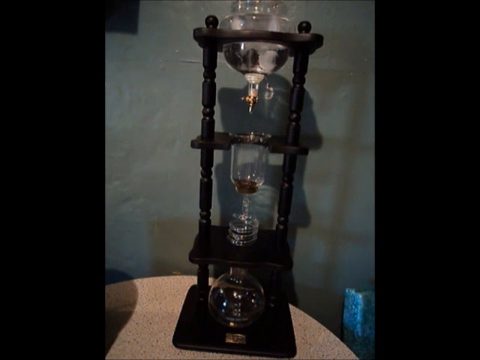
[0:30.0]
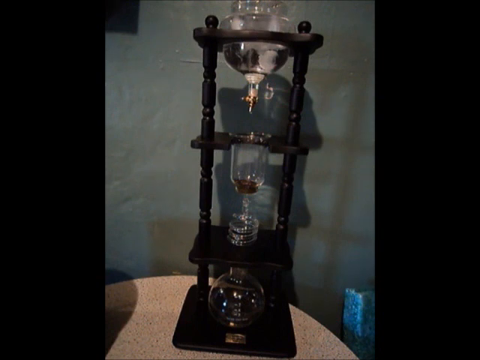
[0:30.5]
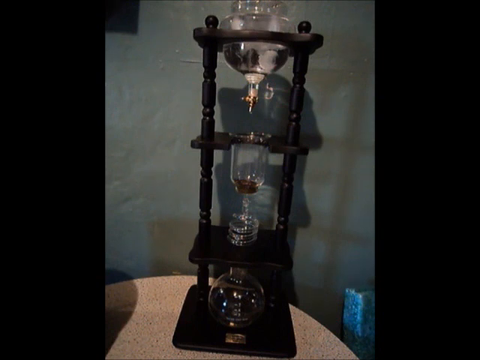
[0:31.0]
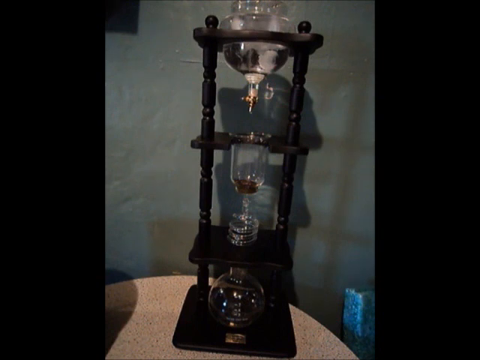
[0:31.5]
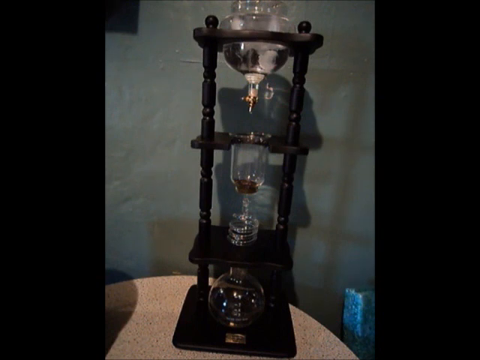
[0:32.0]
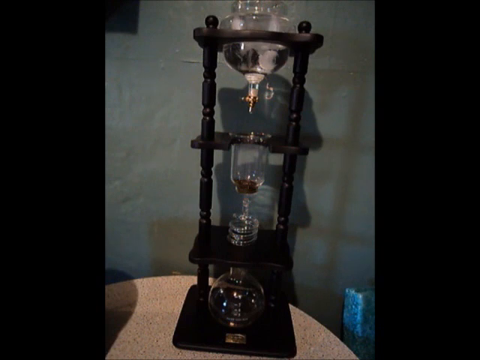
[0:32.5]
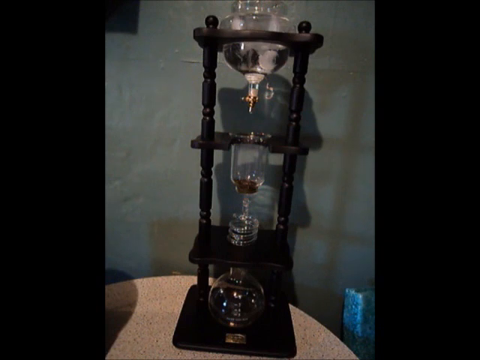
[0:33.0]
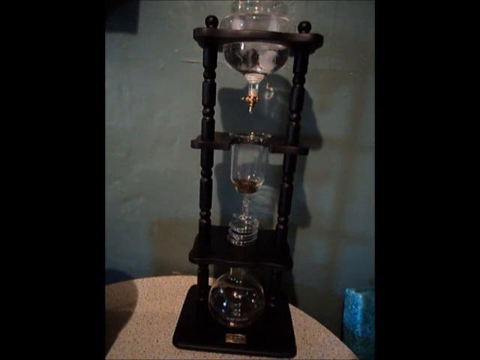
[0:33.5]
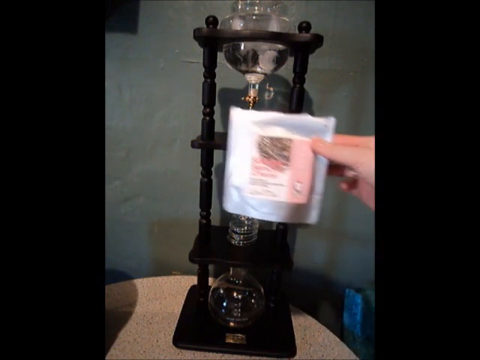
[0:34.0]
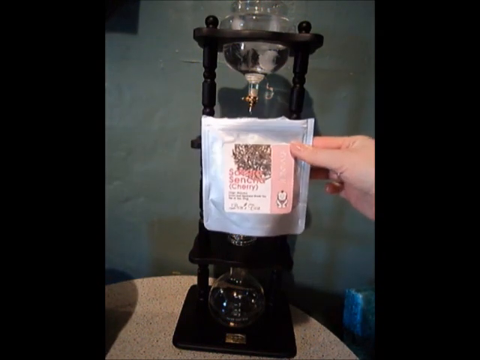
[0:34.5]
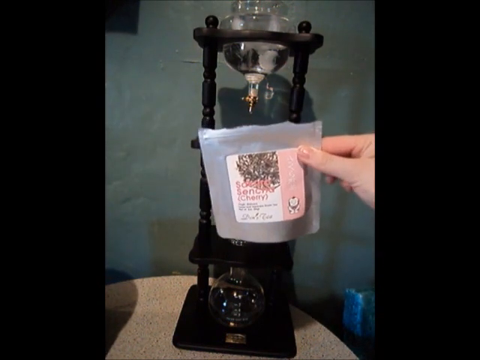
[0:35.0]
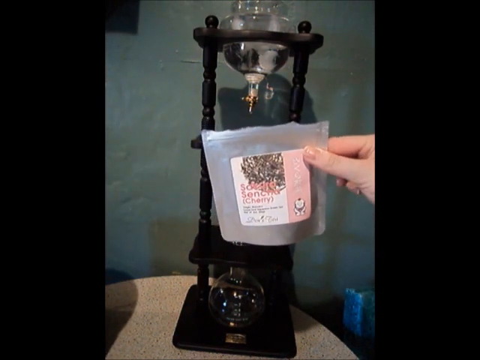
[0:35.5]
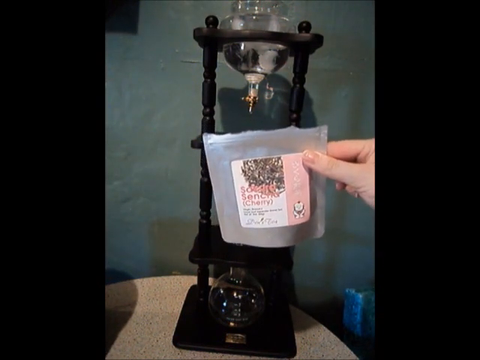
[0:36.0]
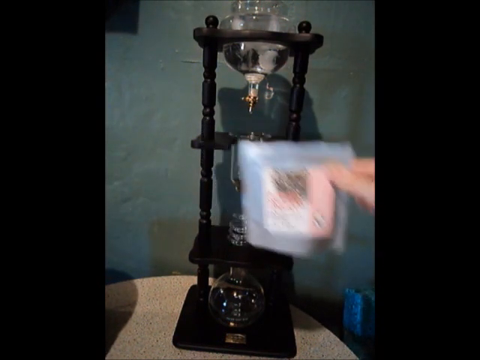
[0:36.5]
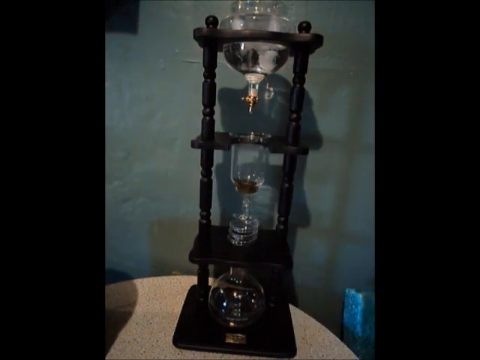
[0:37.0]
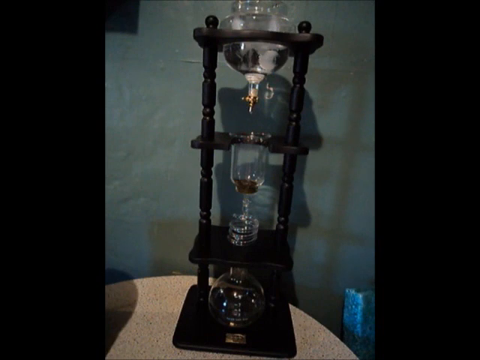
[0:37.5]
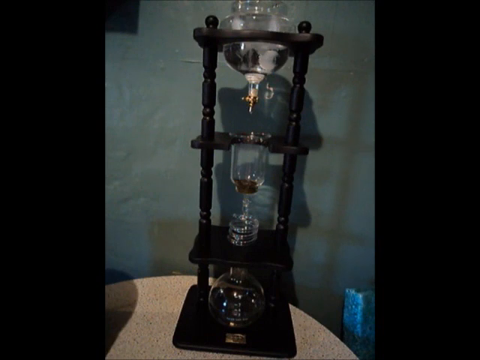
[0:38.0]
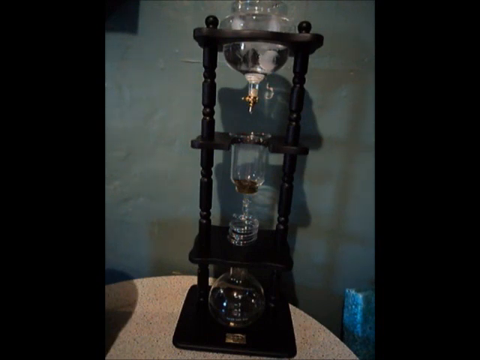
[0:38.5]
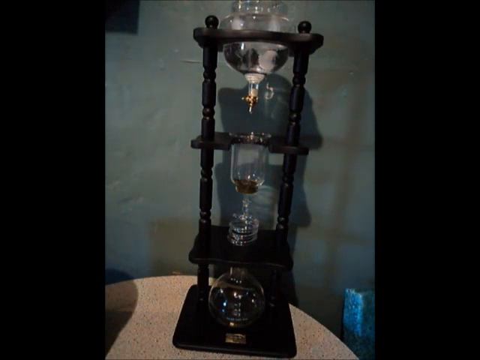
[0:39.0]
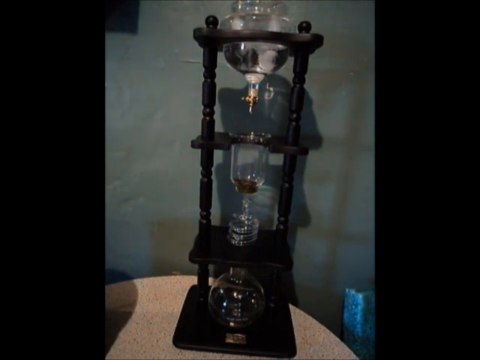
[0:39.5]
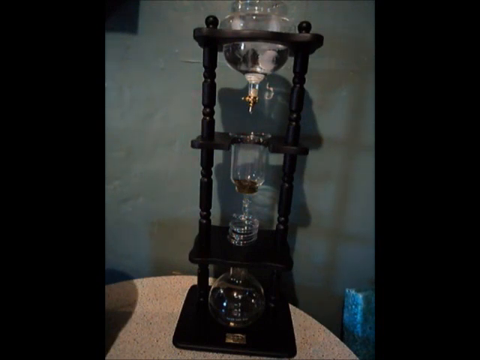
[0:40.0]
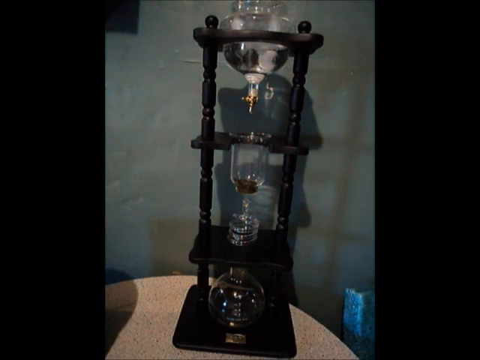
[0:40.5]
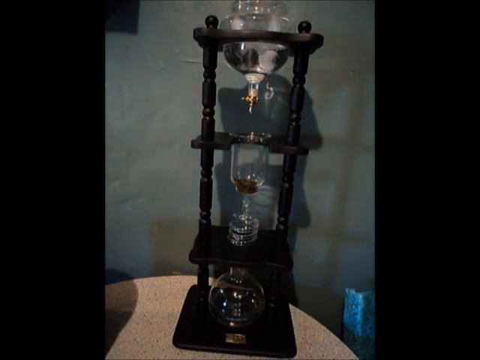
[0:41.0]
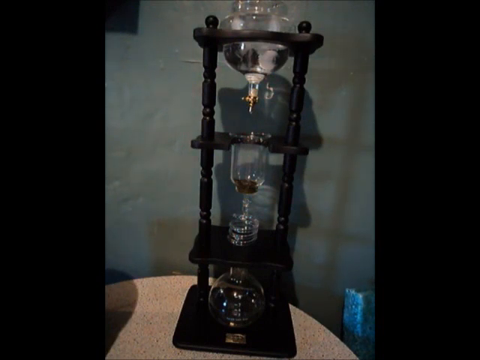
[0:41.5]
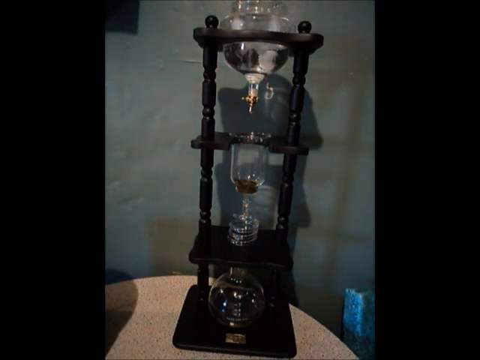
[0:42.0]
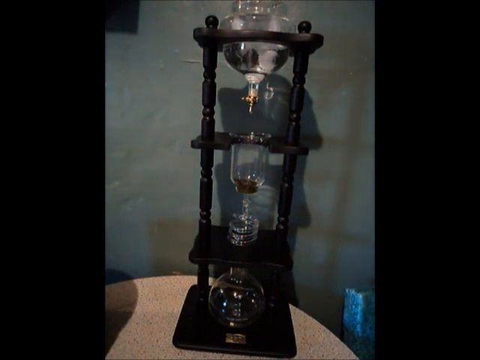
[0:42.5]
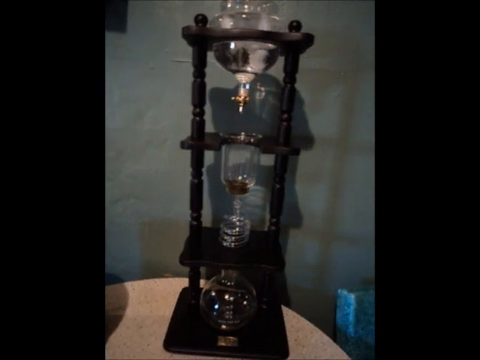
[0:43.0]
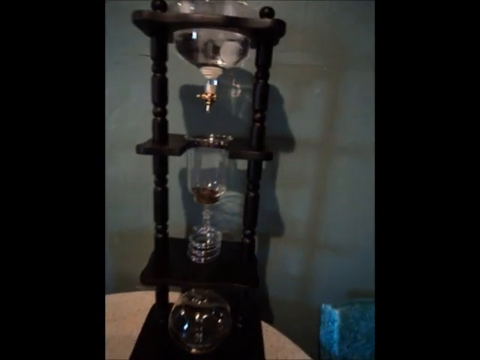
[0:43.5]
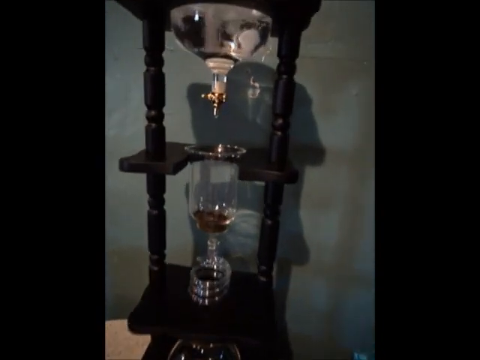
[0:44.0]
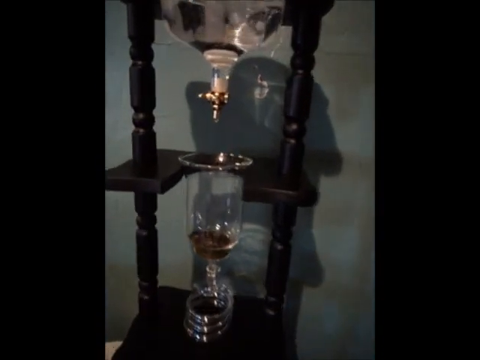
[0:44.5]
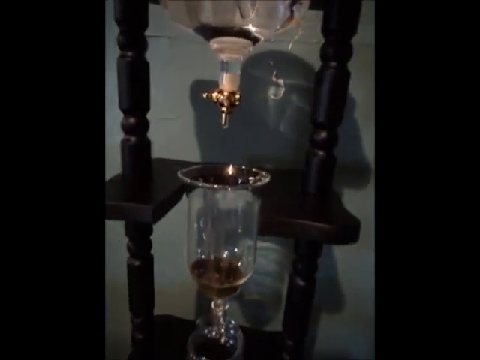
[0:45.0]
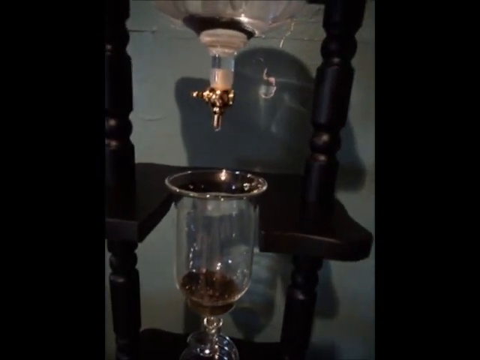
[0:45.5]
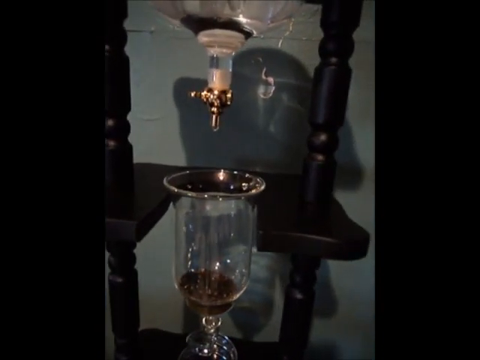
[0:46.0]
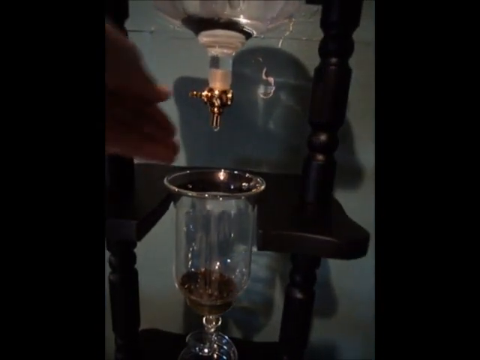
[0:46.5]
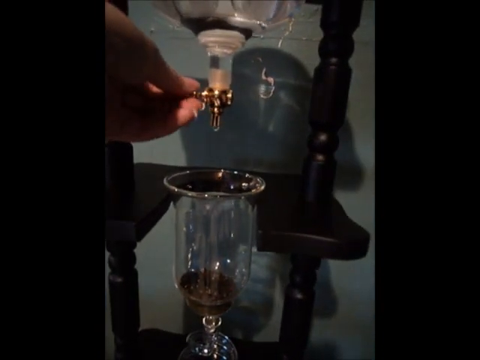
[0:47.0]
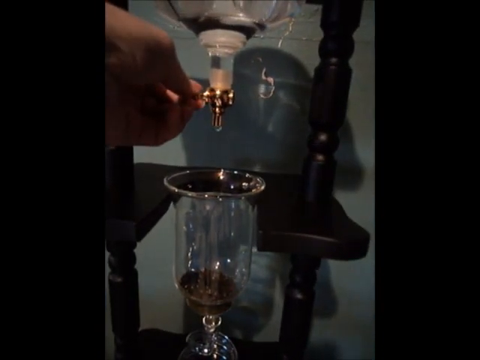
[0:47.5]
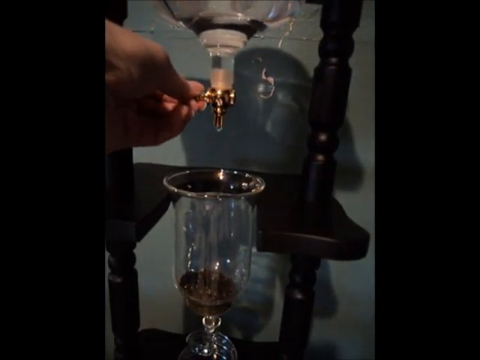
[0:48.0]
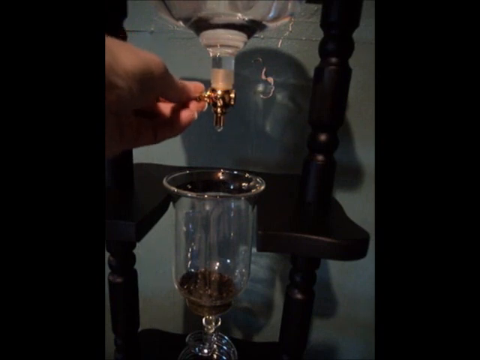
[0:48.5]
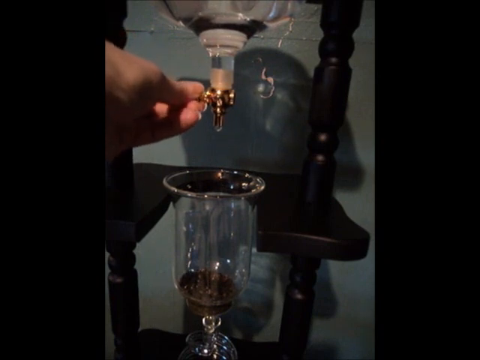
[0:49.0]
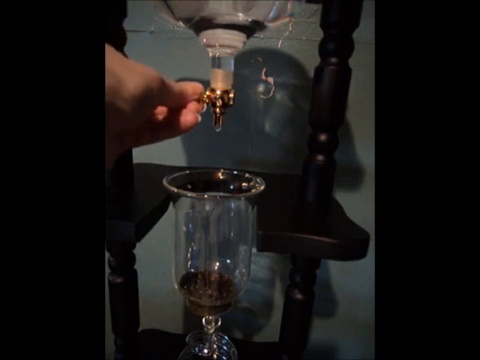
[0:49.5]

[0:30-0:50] The shot begins on the dark brown wooden shelving, four levels high, with glass in the center portion of each level. A hand comes in from the right side with the back of the thumb toward the camera, showing a little of the palm near the pinky and middle finger and a bit of the top of a finger. The thumb is on the front of a bag and the fingers are behind it, except for the pinky, which is folded in toward the hand. The bag is silver with a T on the front and some lettering that is too blurry and small to make out. The hand tilts the top of the bag a little toward the camera, showing that it has already been ripped across and opened. It then moves the bag off camera, down and to the right. A little shadow is visible to the right of this area. The camera then goes in close to the second shelf, where the nozzle is between the shelf and the open glass. A hand comes in from the left side, palm toward the camera and fingers outstretched, grabs the knob on the side, and slowly starts twisting and turning it down, probably to open it so it will start dripping.